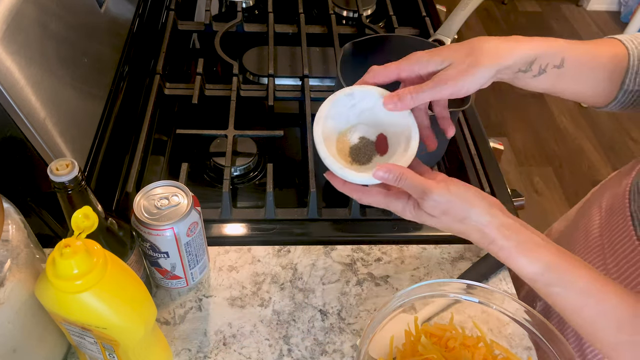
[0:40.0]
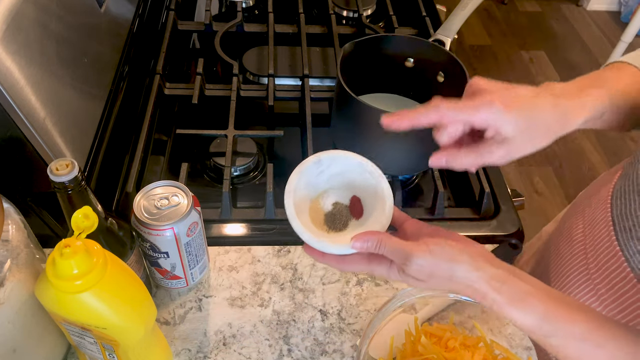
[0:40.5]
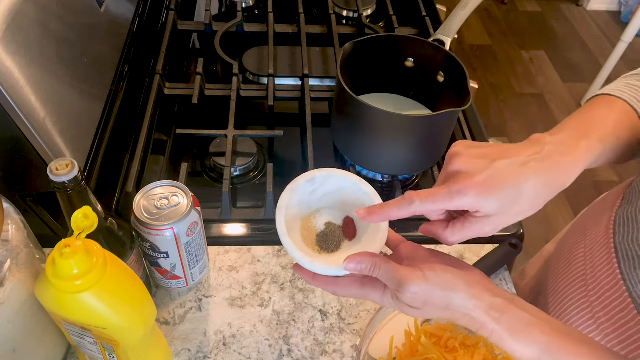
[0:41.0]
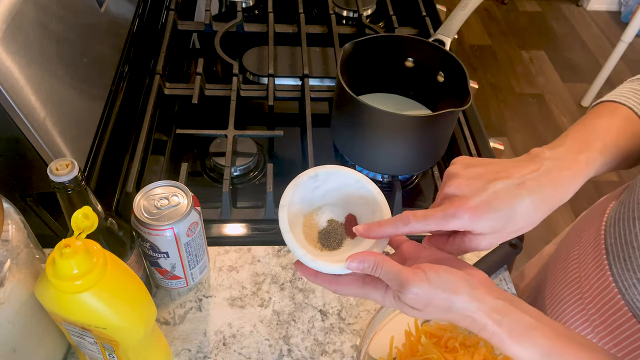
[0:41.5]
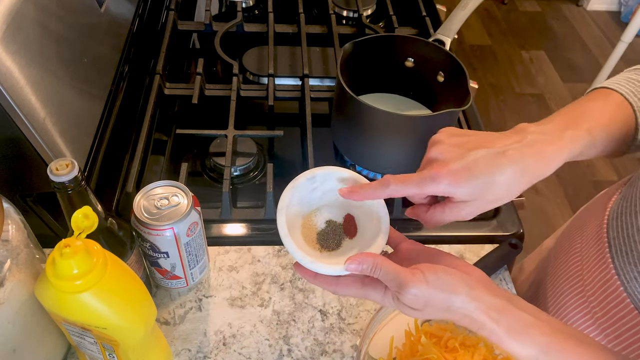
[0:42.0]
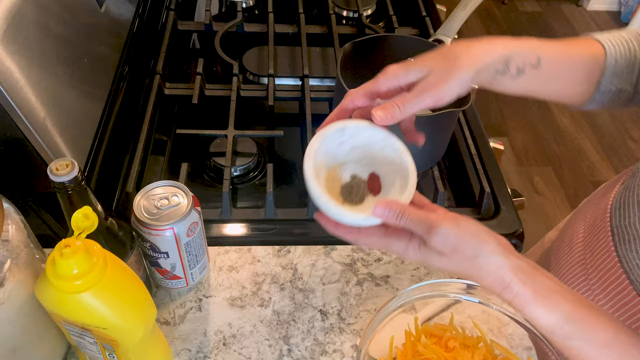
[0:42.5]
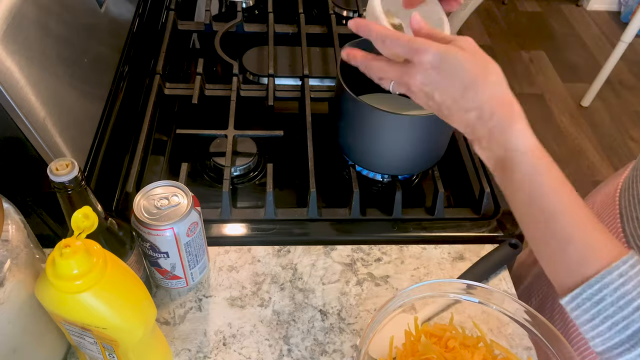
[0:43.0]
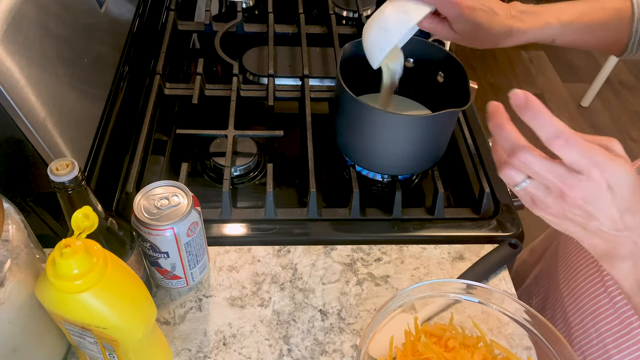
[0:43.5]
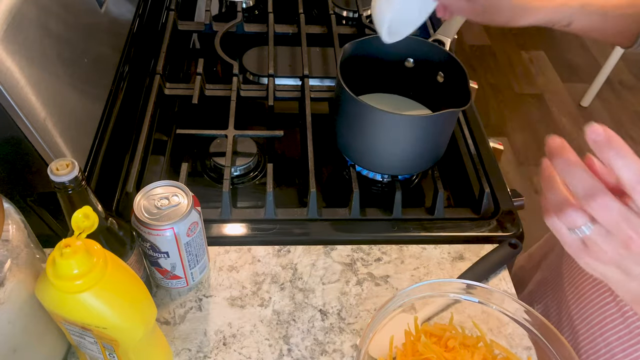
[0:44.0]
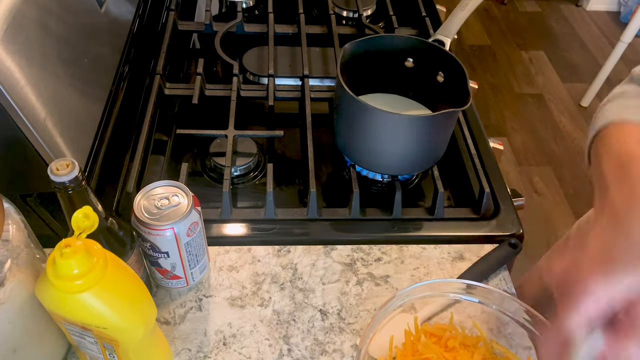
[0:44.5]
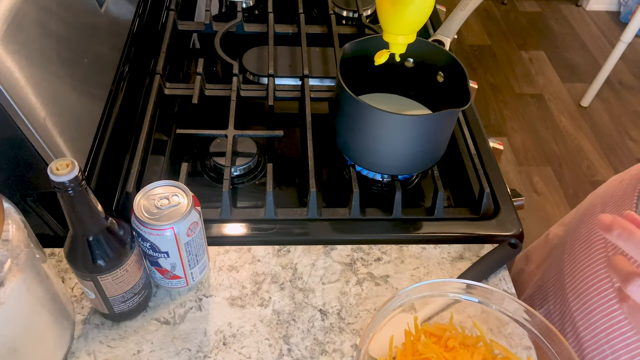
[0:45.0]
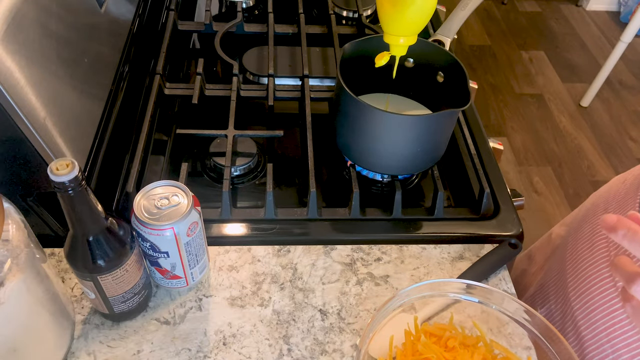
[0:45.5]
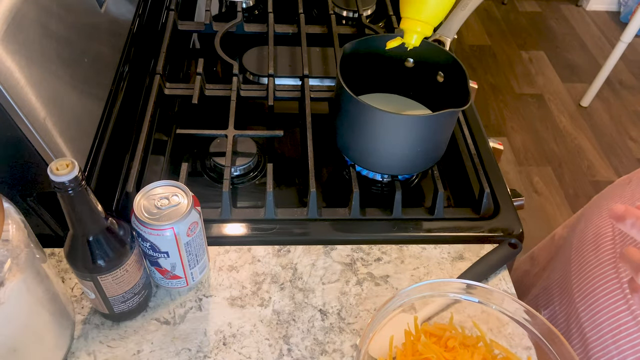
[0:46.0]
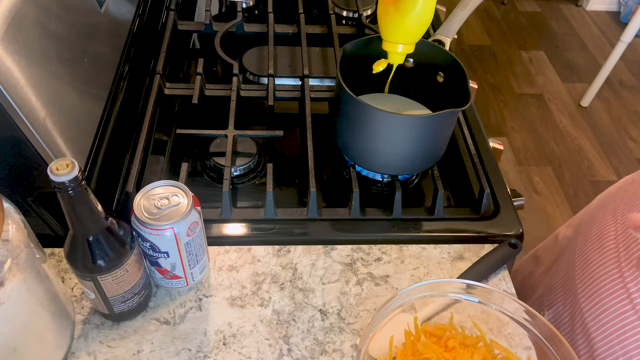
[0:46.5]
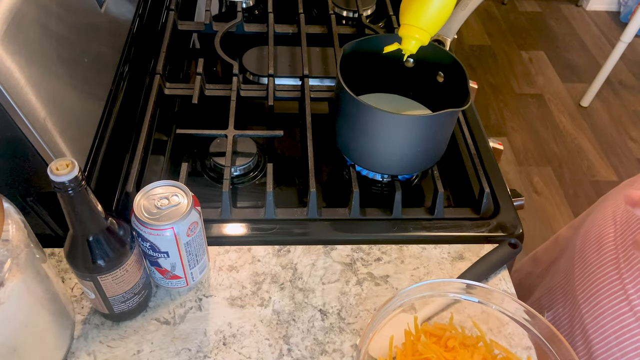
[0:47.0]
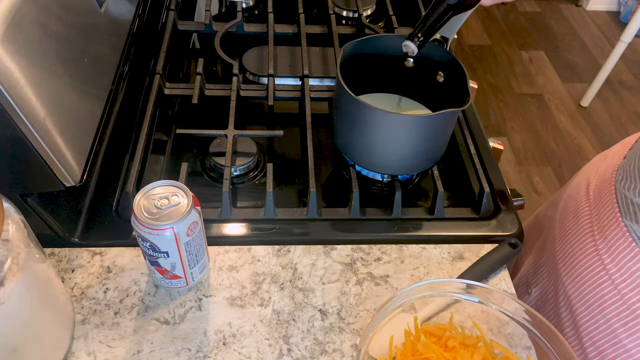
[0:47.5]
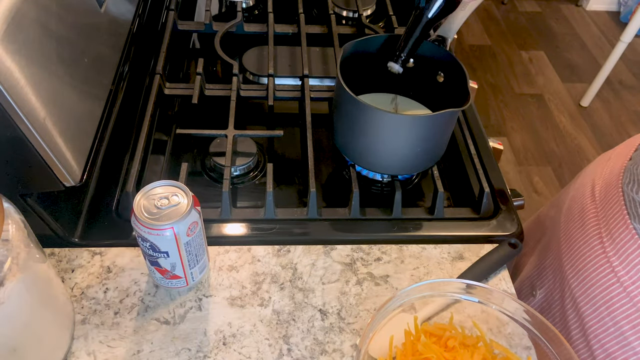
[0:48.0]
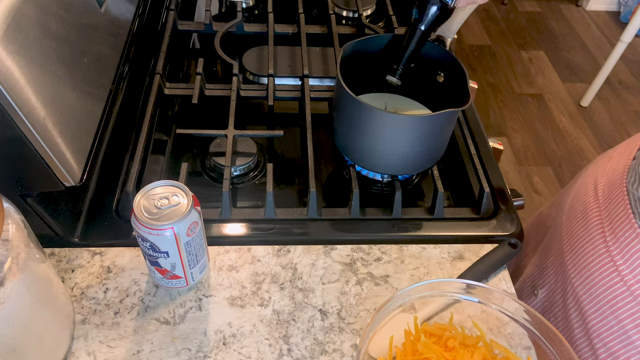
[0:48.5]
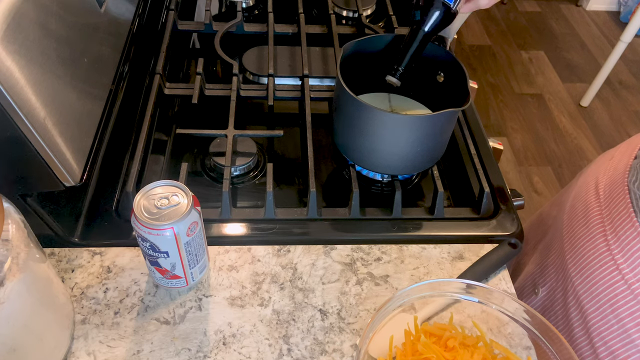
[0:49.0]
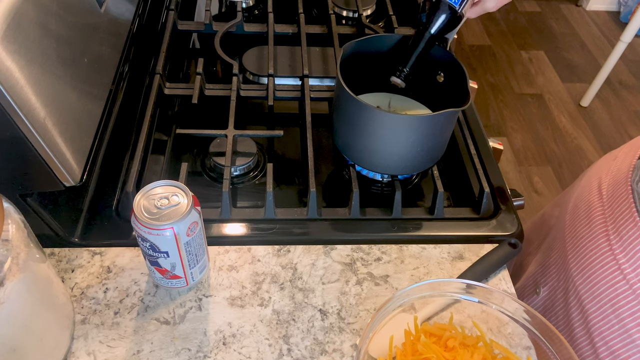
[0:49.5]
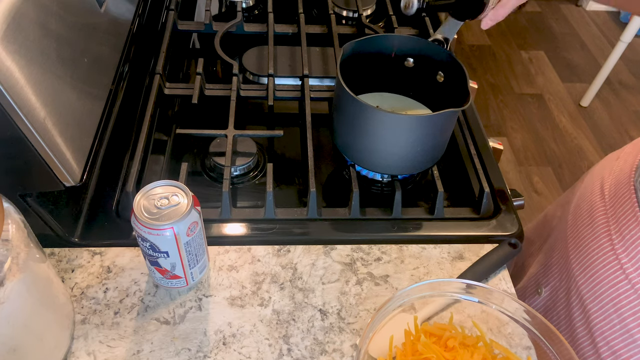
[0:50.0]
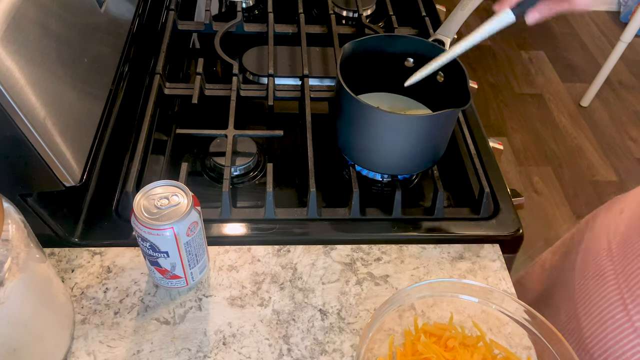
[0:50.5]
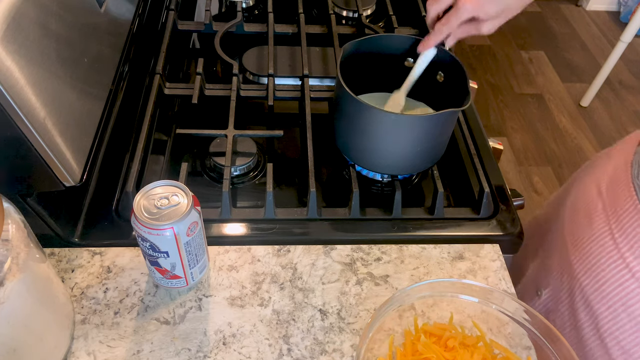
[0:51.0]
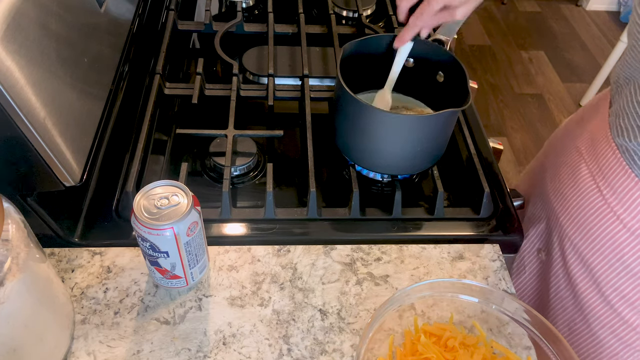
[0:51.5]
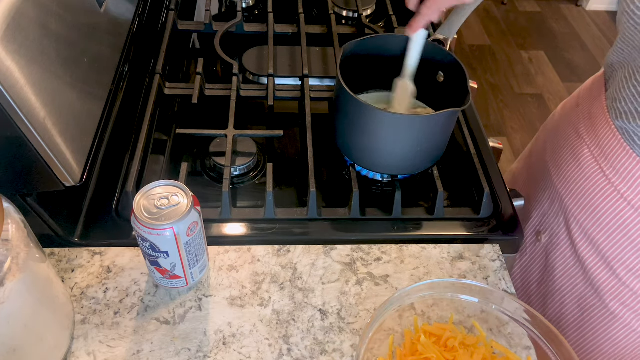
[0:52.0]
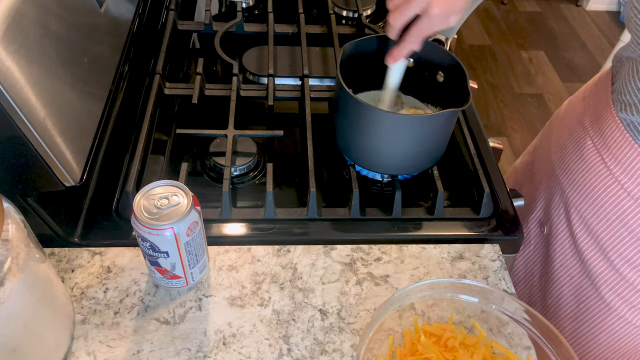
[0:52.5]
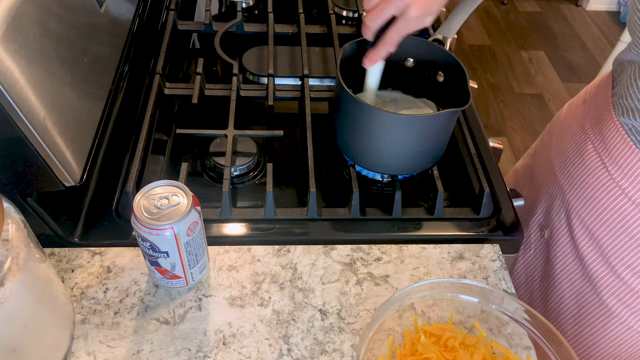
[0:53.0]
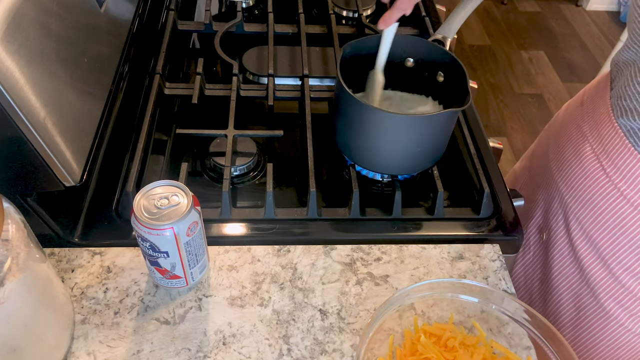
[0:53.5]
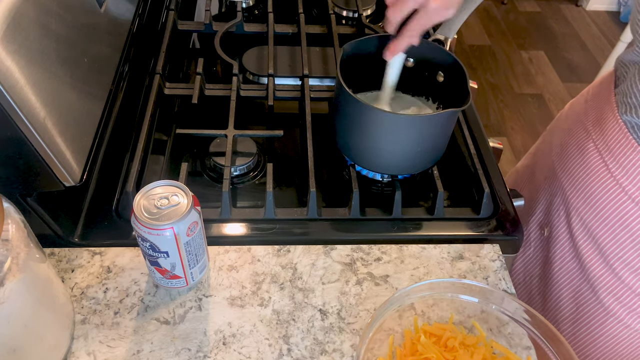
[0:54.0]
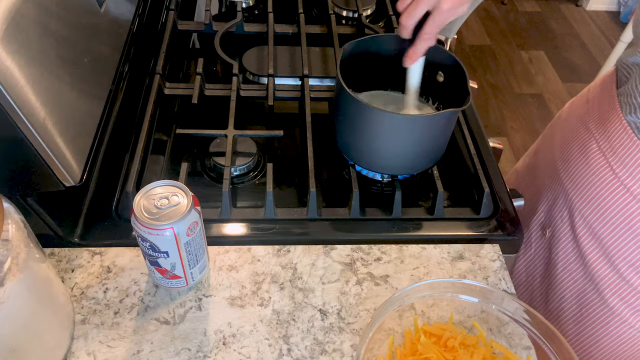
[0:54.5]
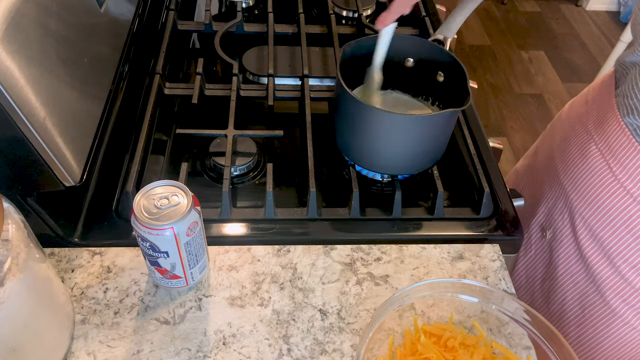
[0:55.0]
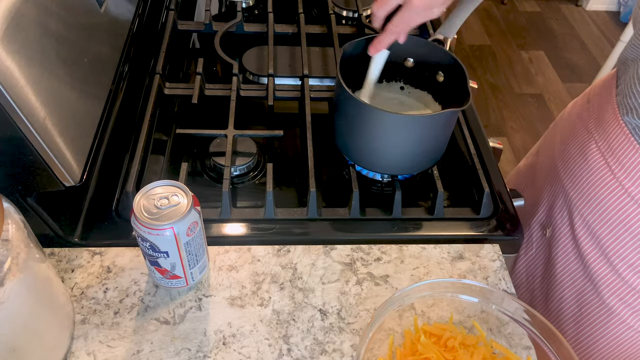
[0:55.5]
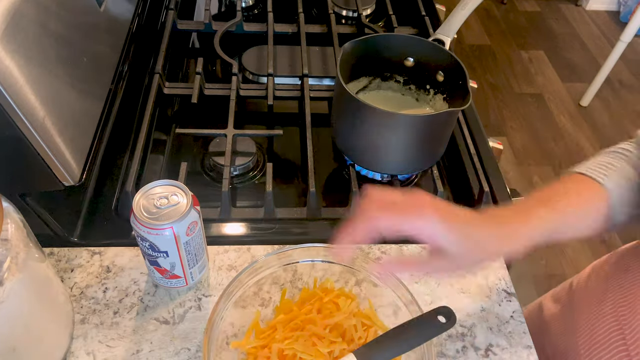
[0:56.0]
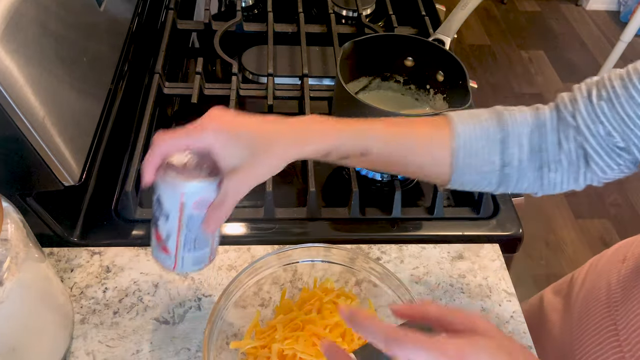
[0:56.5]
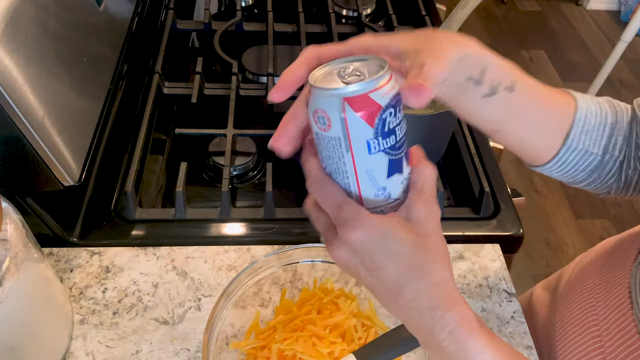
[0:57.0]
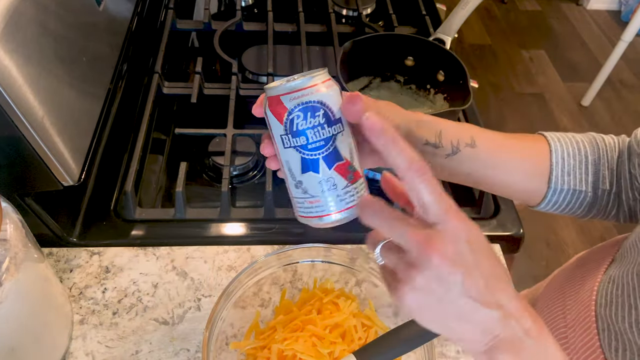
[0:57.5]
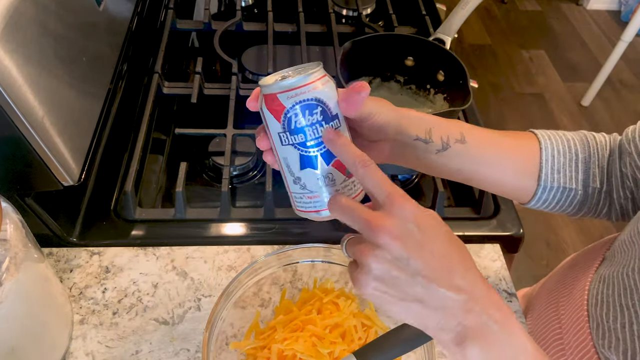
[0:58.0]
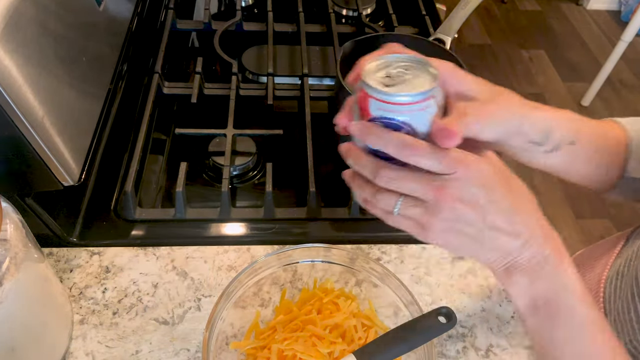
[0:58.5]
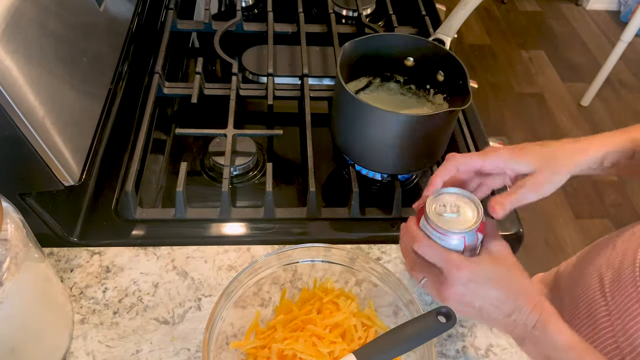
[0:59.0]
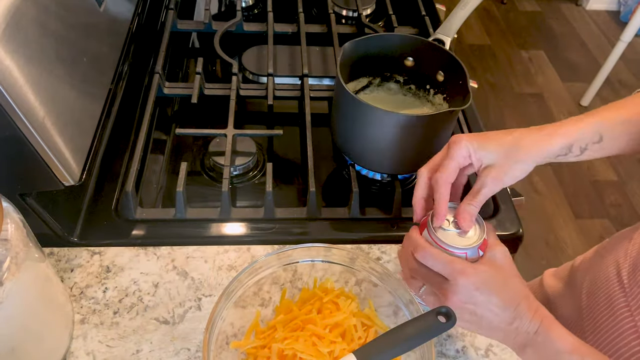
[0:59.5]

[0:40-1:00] After the yolk, she adds spices, then what looks like mustard. The stove is on with a blue flame, and the pan is probably almost boiling. After the mustard she adds an oil and mixes everything together. She then takes what looks like a cool drink with "blue ribbon" written on it and adds it to the mix. She has tattoos on her right hand.